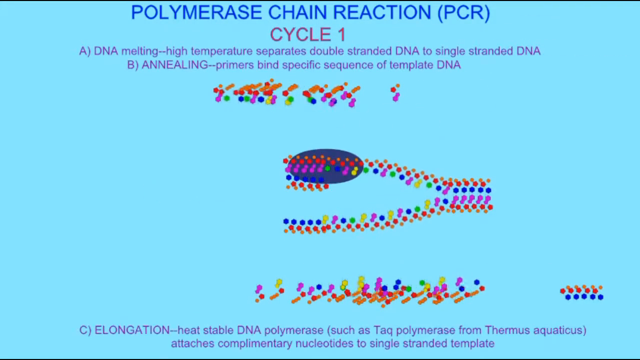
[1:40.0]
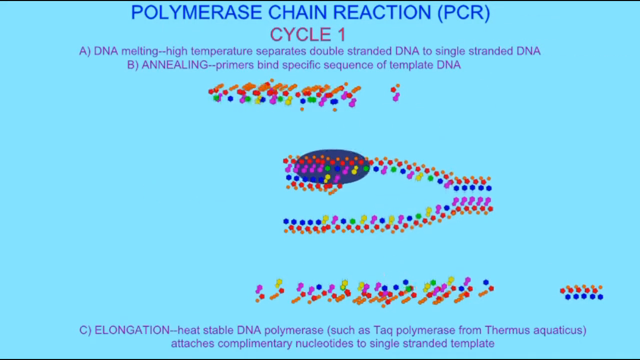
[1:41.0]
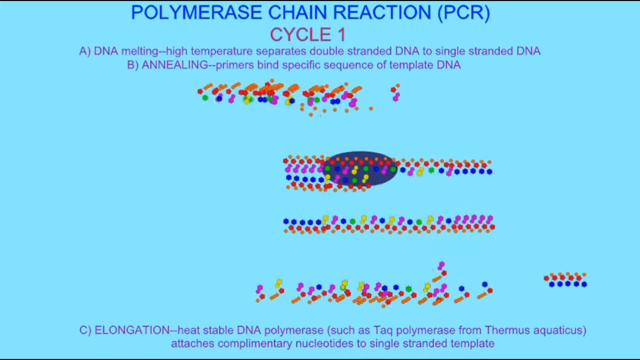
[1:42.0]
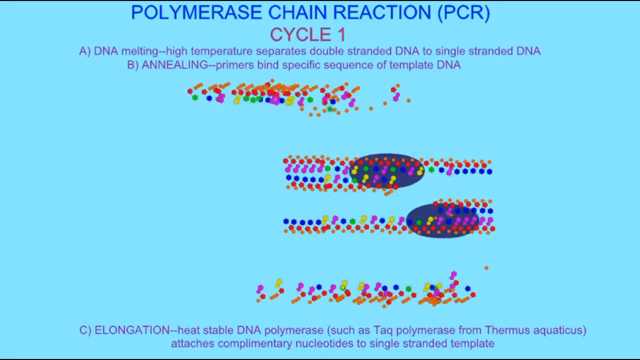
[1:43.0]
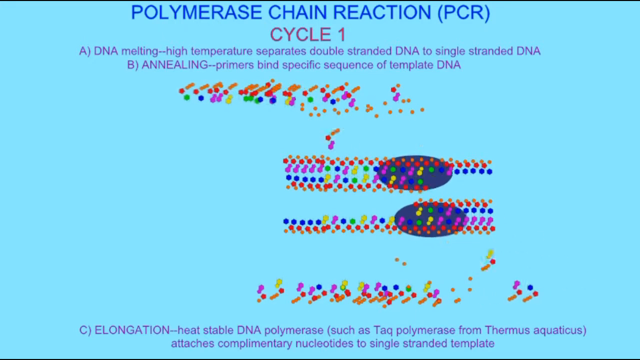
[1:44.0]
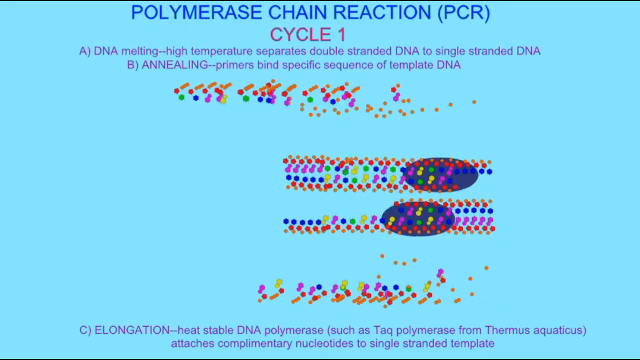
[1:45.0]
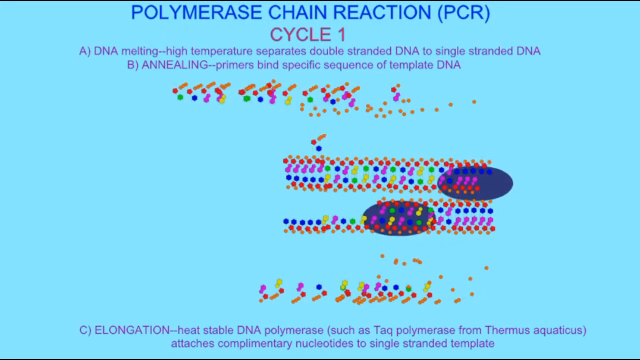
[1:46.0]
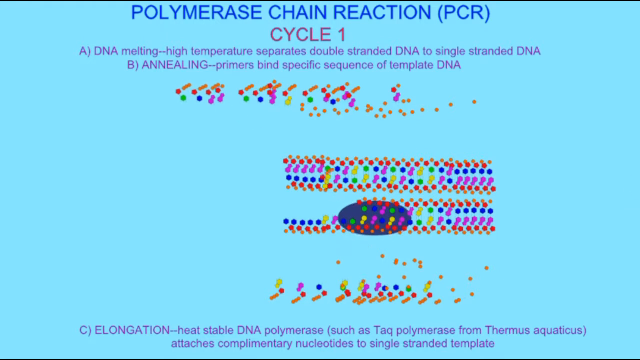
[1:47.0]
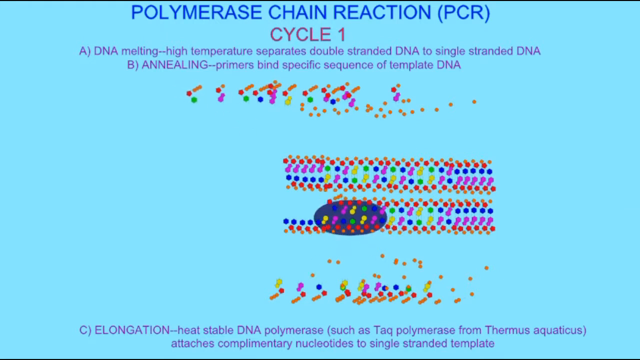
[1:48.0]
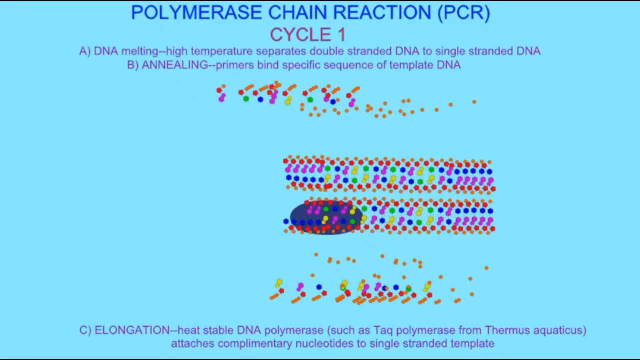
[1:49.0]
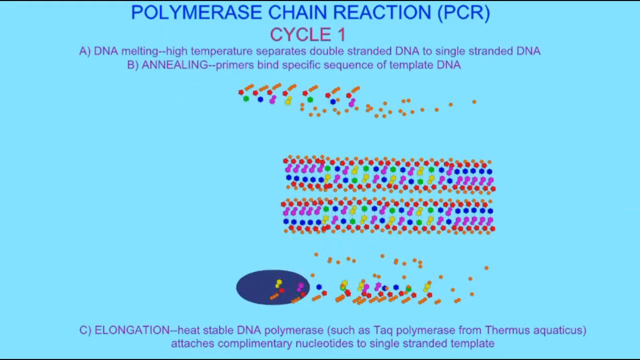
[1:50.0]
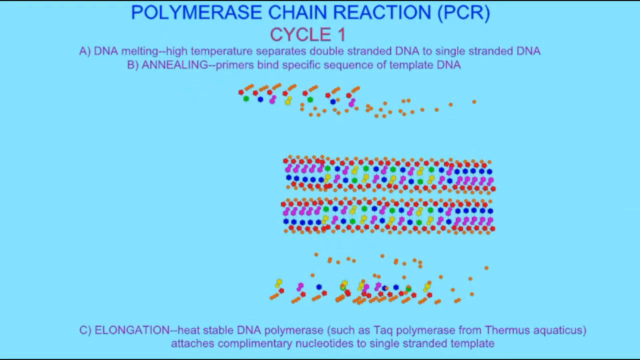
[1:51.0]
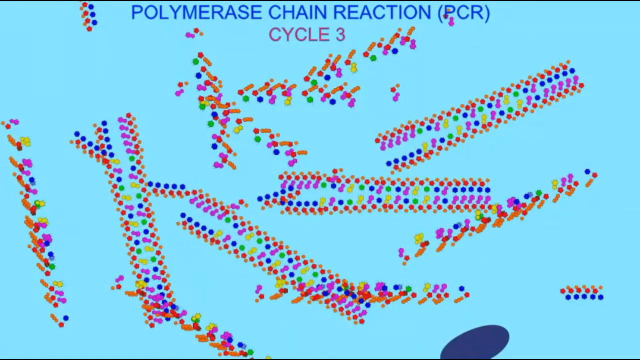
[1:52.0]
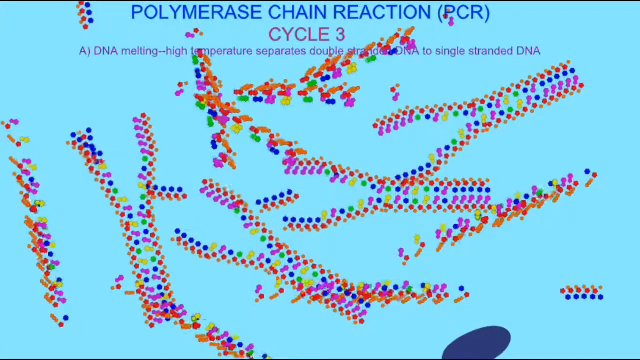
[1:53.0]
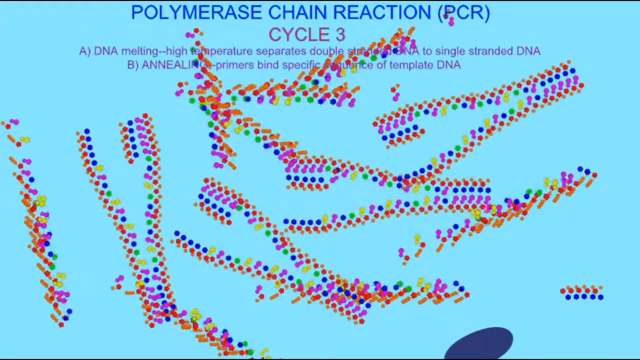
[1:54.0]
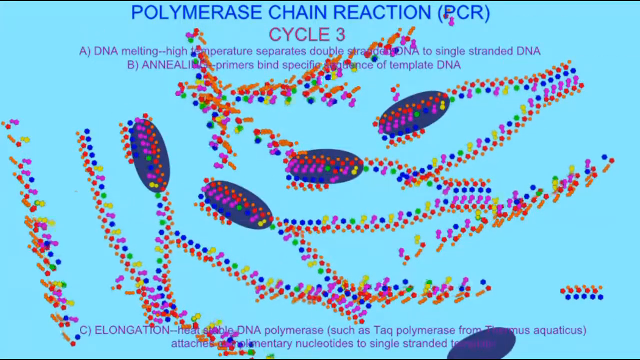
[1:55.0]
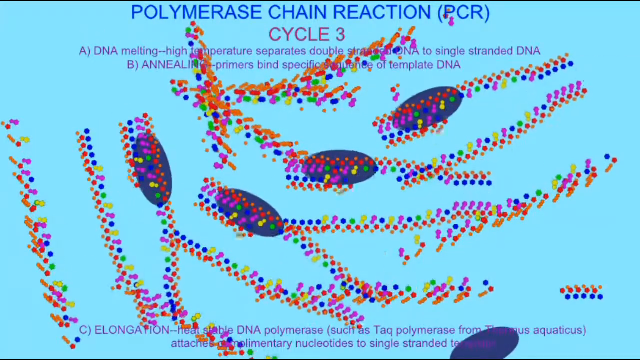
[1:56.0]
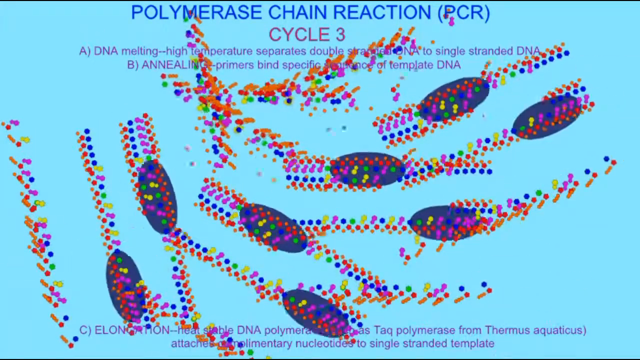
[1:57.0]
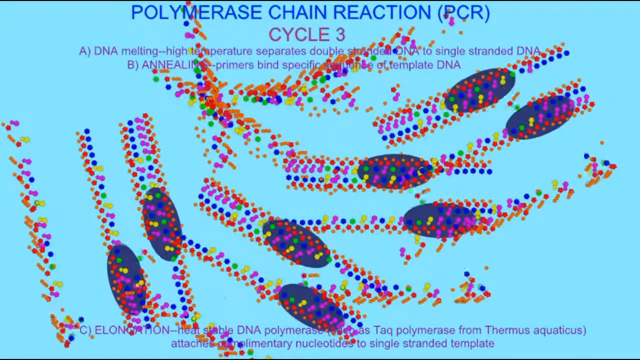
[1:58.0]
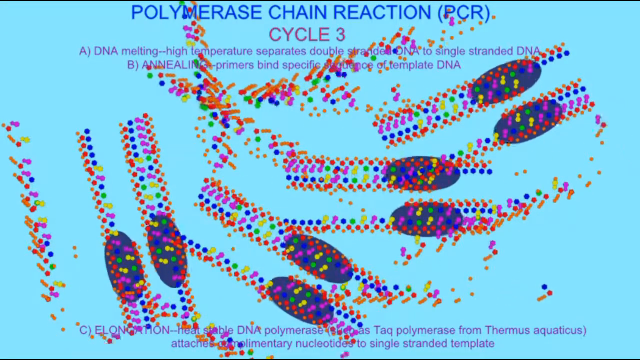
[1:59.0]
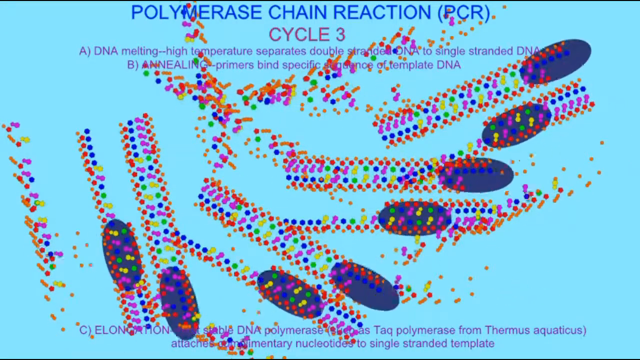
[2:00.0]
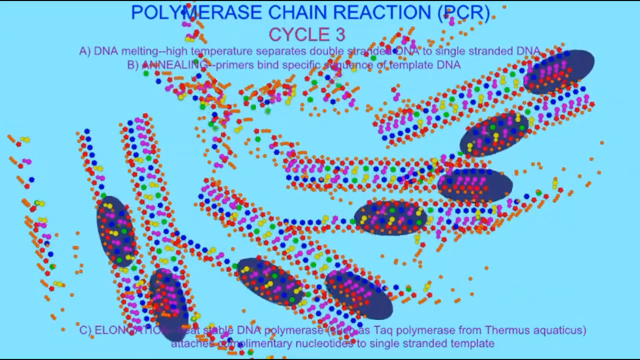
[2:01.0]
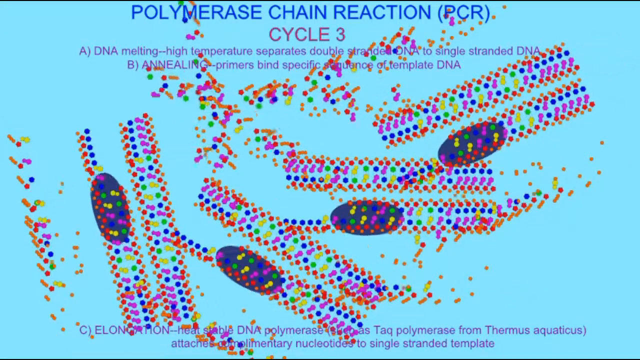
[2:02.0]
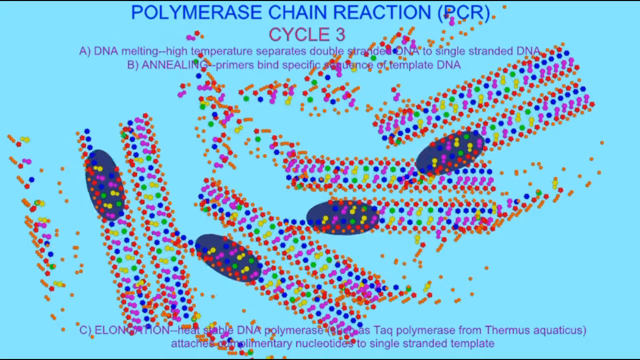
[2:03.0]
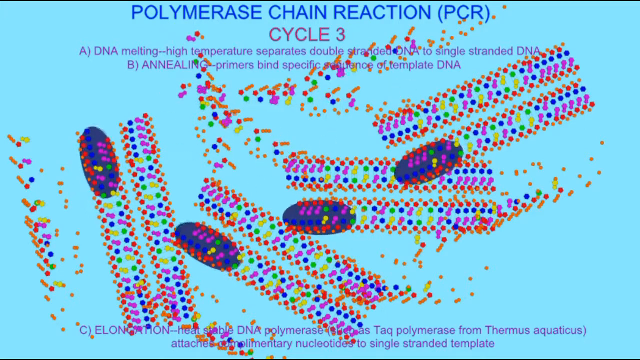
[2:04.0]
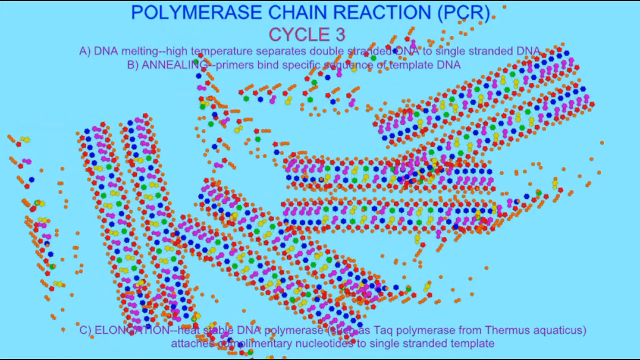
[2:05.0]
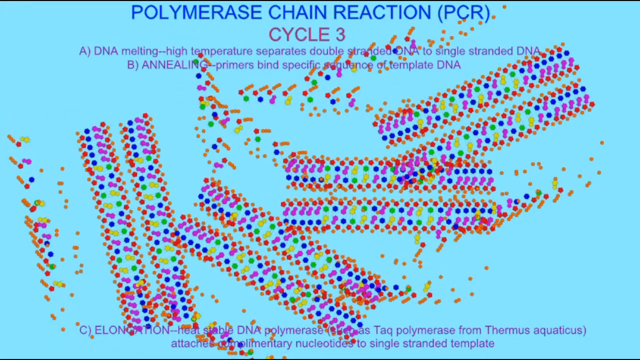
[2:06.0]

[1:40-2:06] The backdrop is a light blue screen with words at the top and an image of a DNA sequence below. Centered at the top are the words "POLYMERASE CHAIN REACTION" in all-capital blue letters, with "(PCR)" in parentheses to the right. Below that is a line in purplish all-caps letters reading "CYCLE 1", with the 1 as a numeral. Below that, in smaller lavender-purple print, it says "A) DNA melting high temperature separates double stranded DNA to single stranded DNA", with DNA capitalized in each instance. Below that, a centered line in the same lavender-purple color reads "B) ANNEALING" followed in smaller letters by "primers bind specific sequence of template DNA". The DNA chart or map below is multicolored with reds, purples, yellows, greens and blues, and runs in three lines from below the words down to the bottom of the screen.